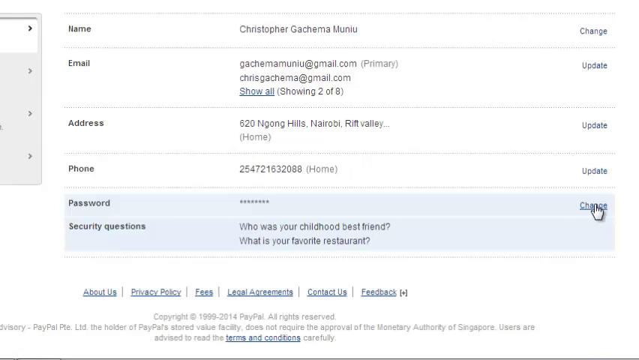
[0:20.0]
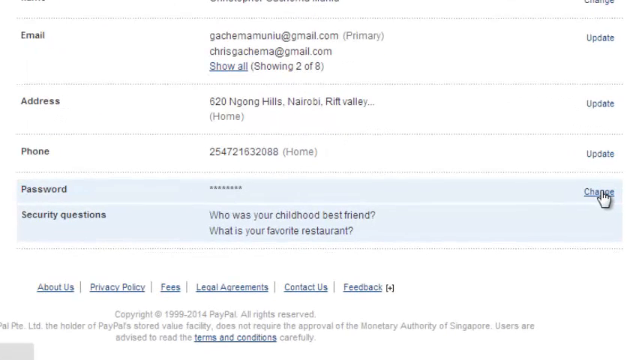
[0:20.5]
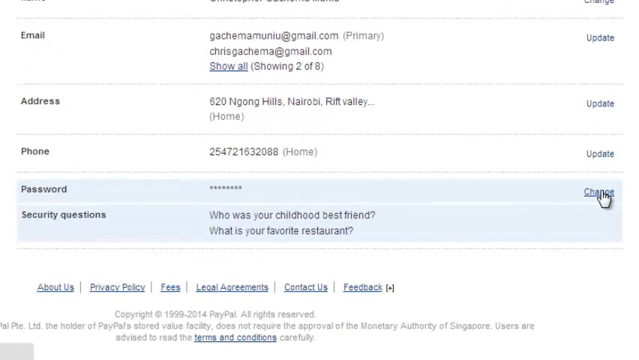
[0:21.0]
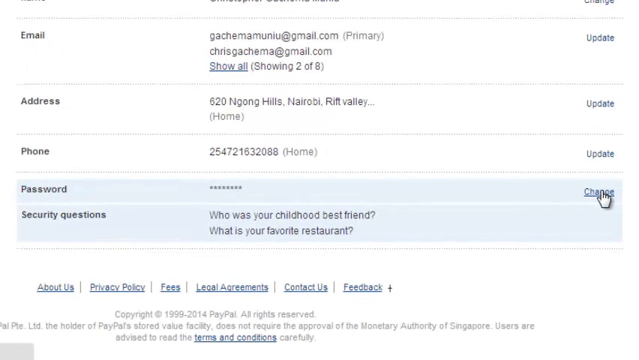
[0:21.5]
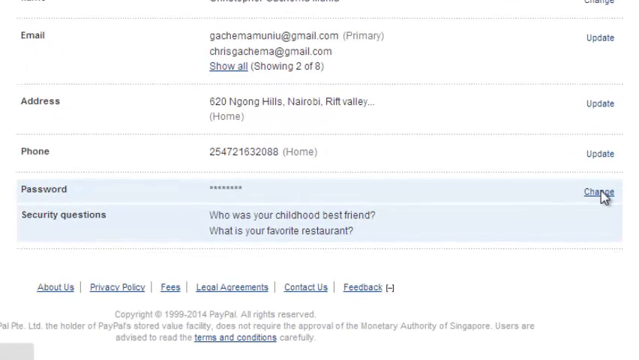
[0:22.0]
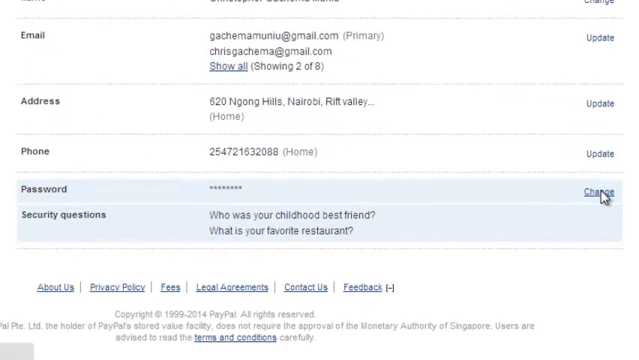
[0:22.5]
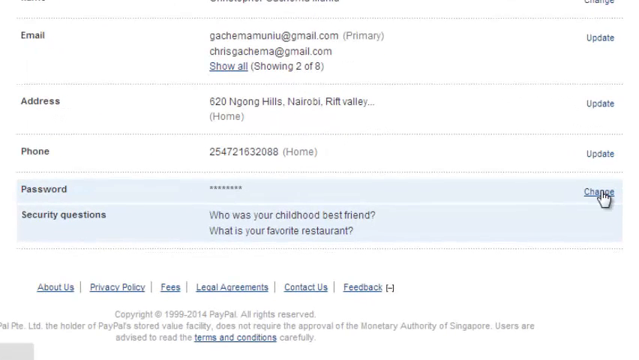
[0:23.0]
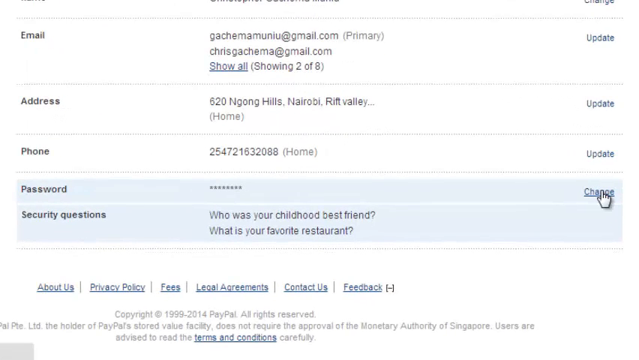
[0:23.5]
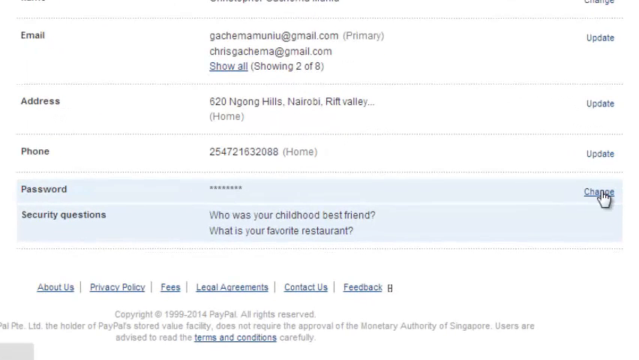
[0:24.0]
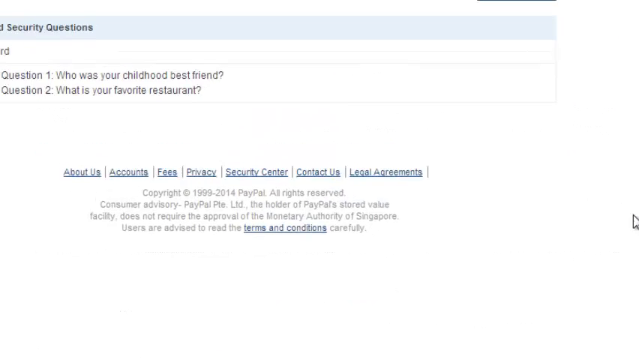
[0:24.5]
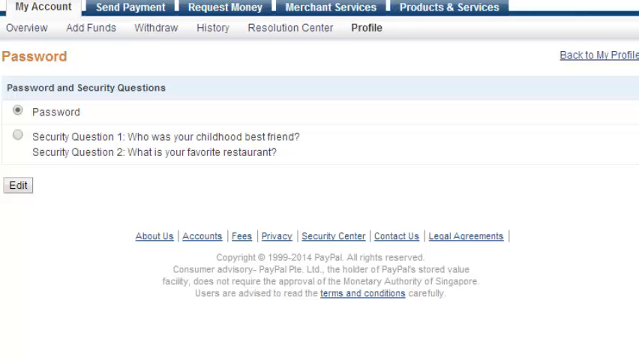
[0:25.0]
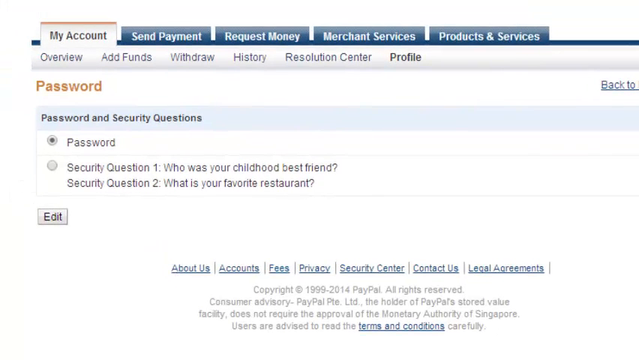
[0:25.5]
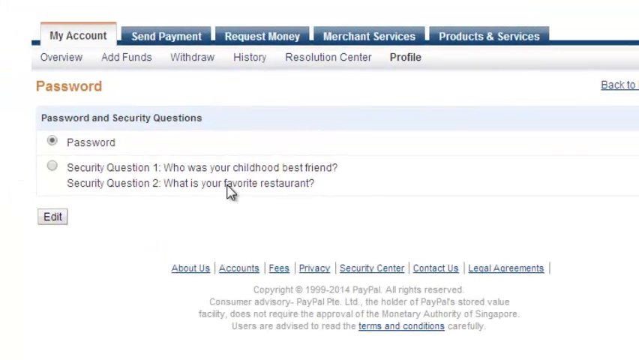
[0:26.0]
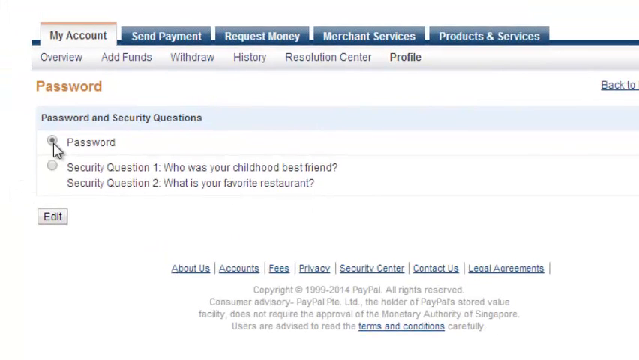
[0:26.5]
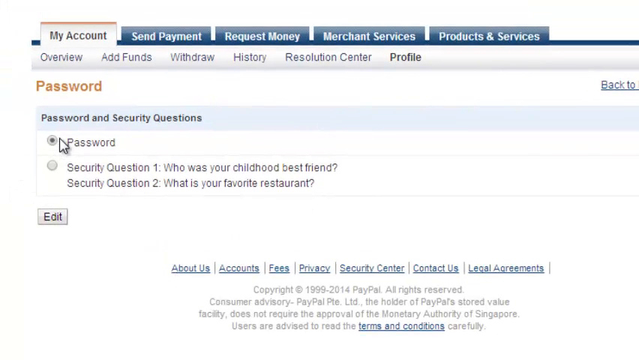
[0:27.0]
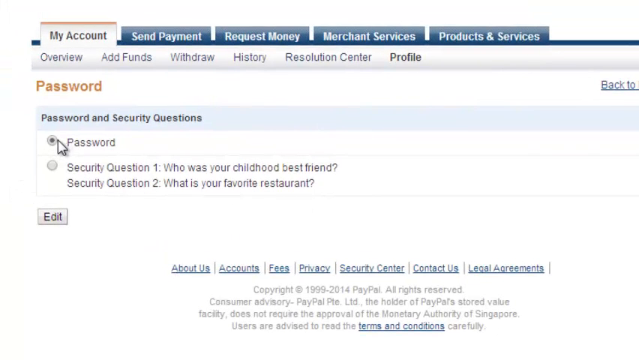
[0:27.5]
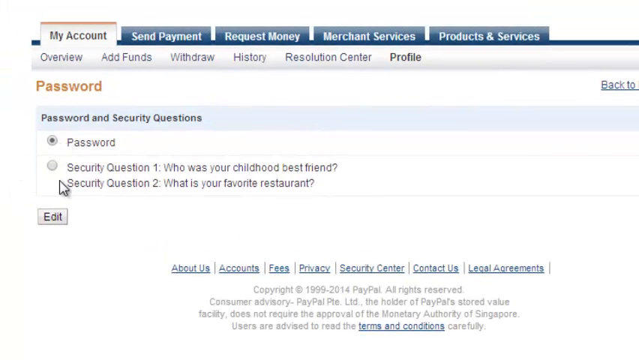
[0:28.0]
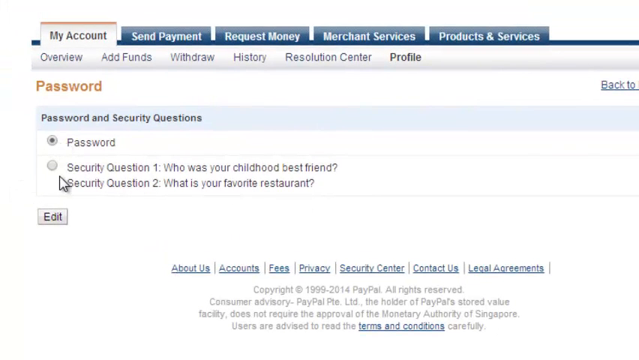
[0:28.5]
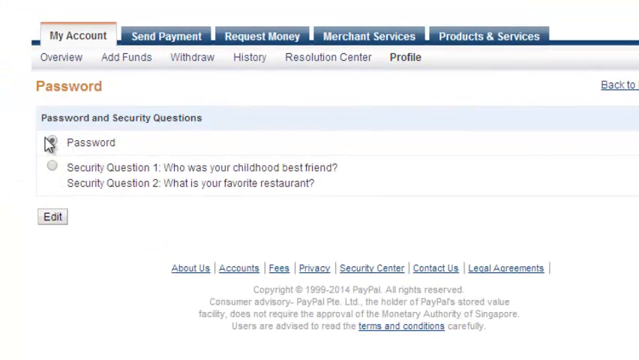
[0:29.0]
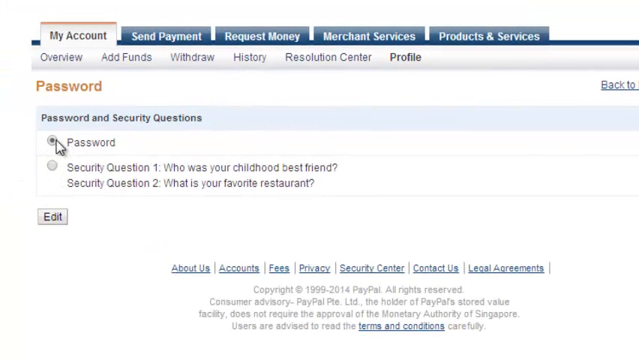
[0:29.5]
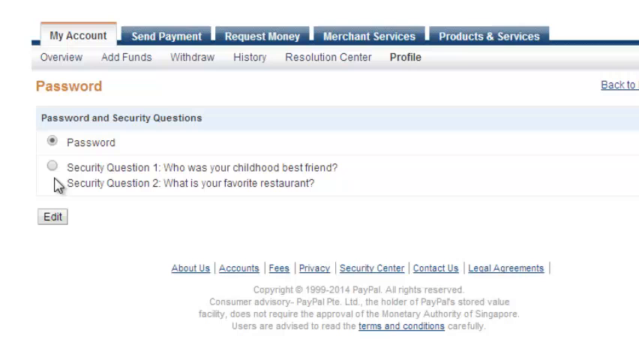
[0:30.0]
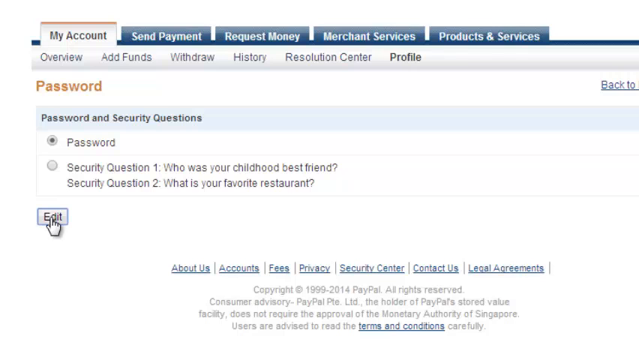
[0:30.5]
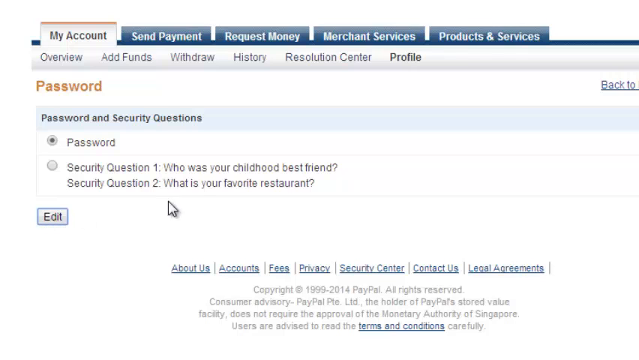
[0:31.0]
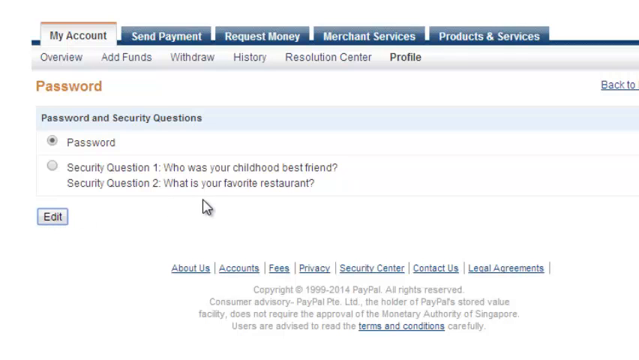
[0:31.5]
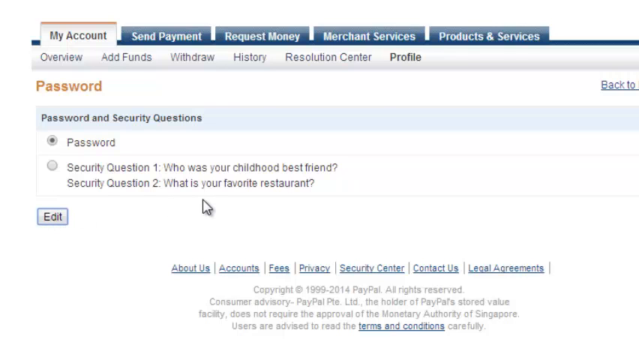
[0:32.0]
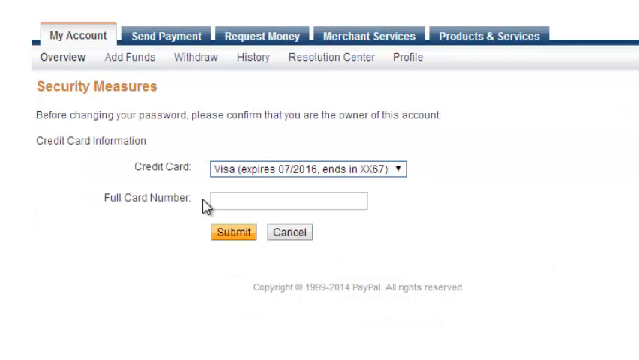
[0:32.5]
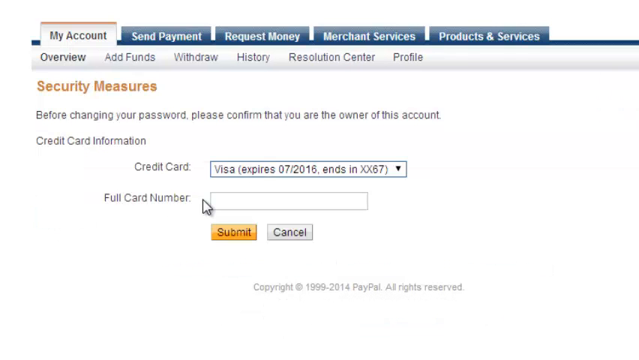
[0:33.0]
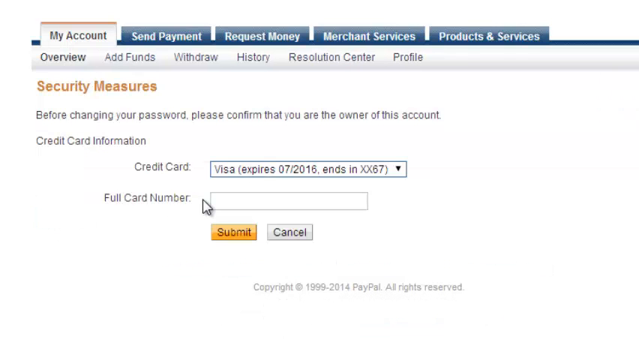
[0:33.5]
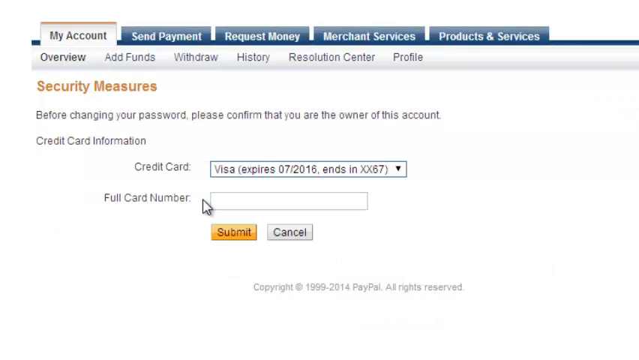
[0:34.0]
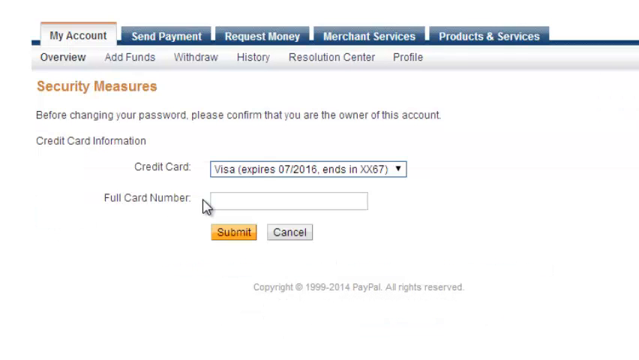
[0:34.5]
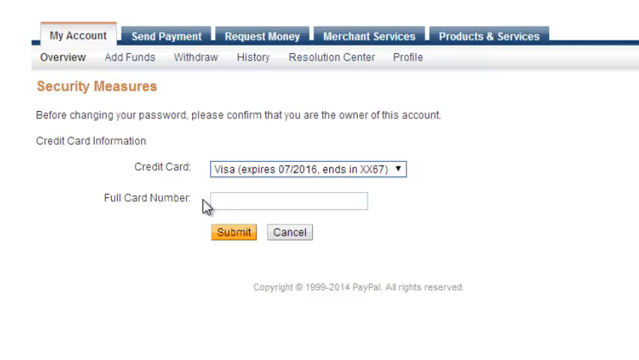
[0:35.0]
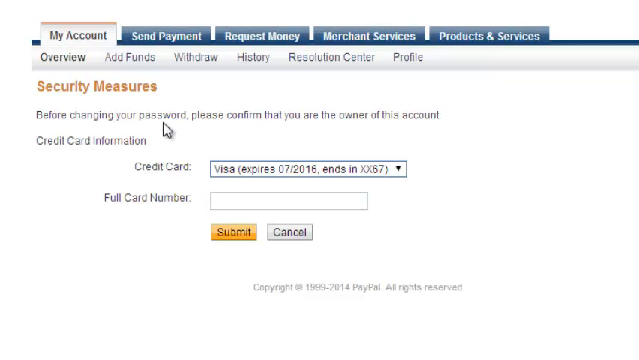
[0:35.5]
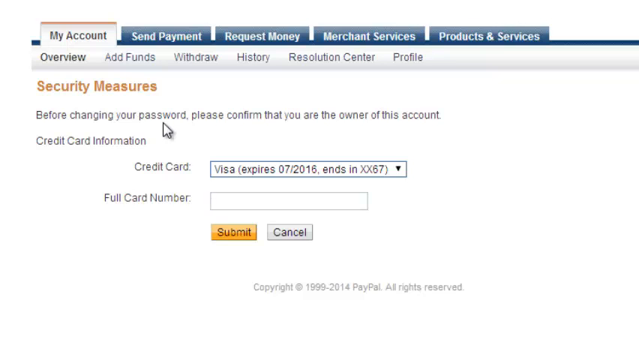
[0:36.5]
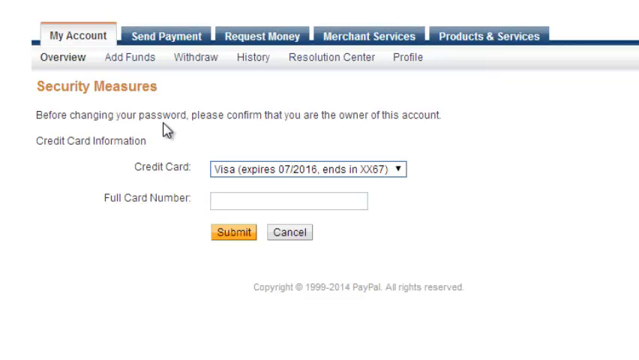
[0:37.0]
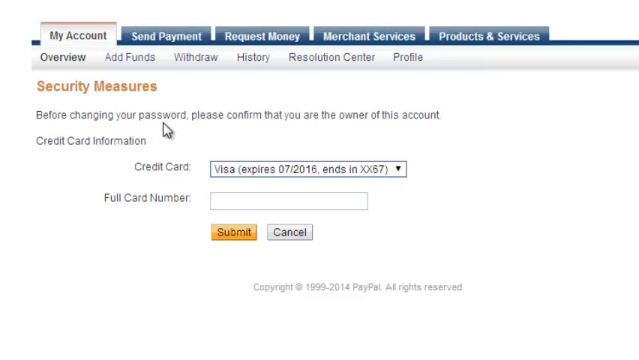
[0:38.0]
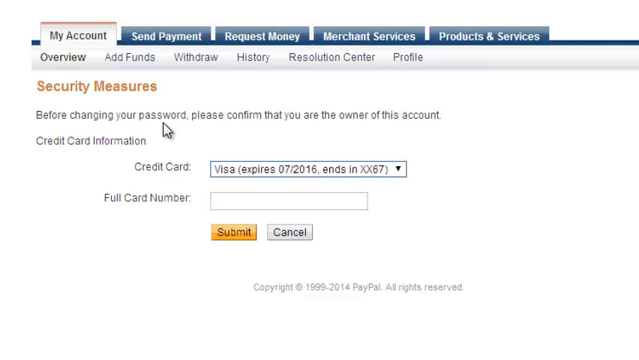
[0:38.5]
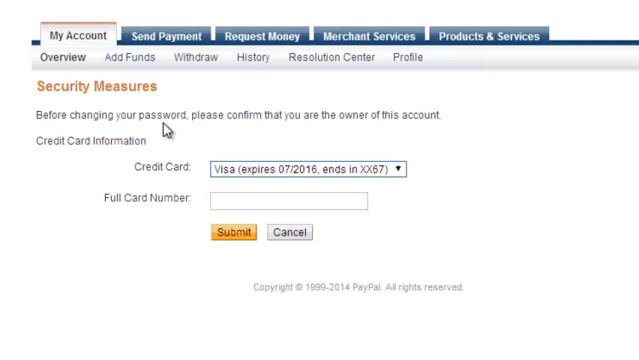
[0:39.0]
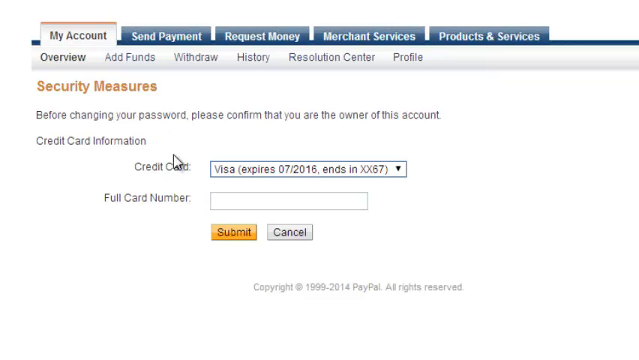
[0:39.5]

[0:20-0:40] On what appears to be a website, the person moves the cursor around the page. A list says "password" with "change" on the right side, and the cursor, shown as a little hand, is on the change link. They appear to click it, and the video cuts to a page that says "password" in kind of a brown color, with "password and security questions" underneath. A selected radio button is labeled "password", and the cursor is there too. Underneath is an "edit" button, which the person clicks. The video cuts to another page that says "security measures" and "credit card", with a drop-down menu reading "visa expires" and "July 2016". Below that it says "full card number" with a box to enter the number, and underneath are a submit button and a cancel button. The cursor is near the full card number and then moves underneath the password text.